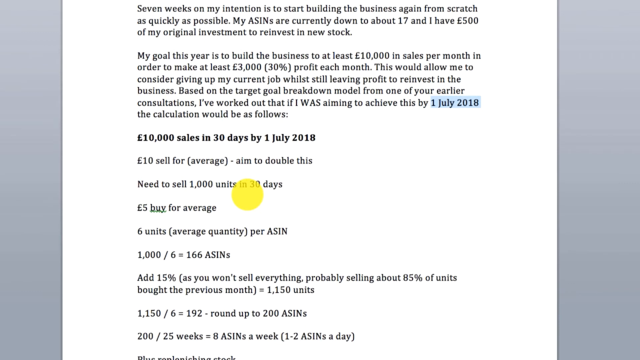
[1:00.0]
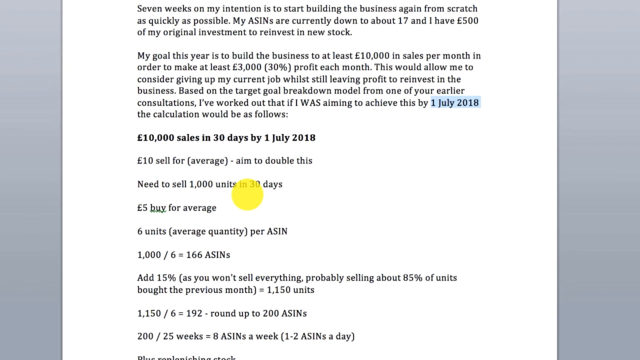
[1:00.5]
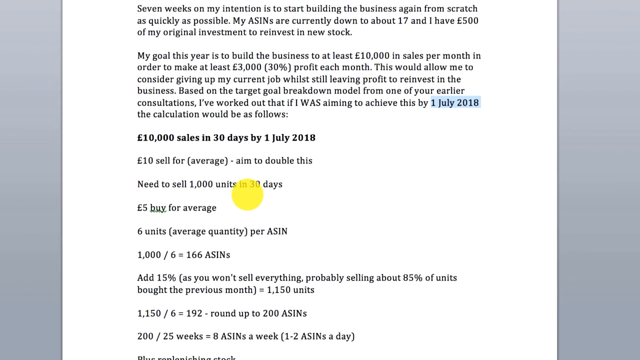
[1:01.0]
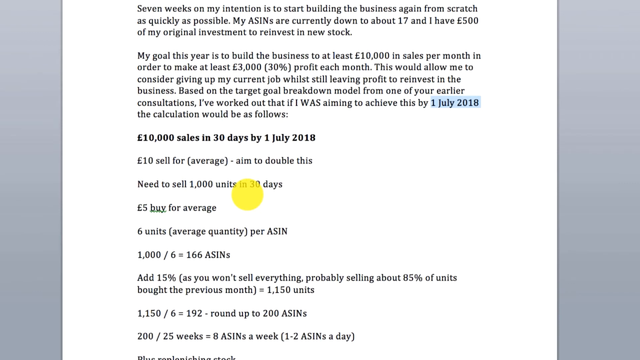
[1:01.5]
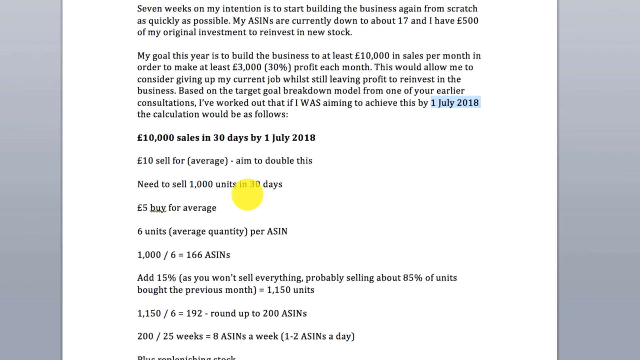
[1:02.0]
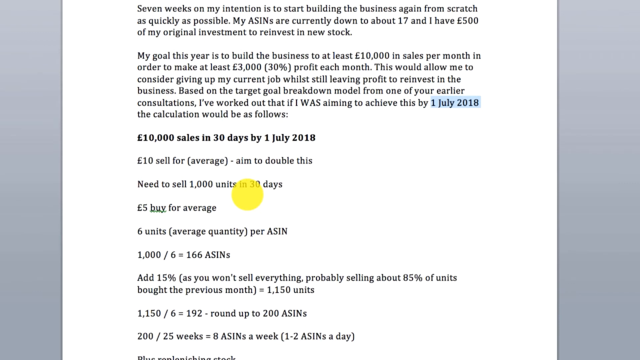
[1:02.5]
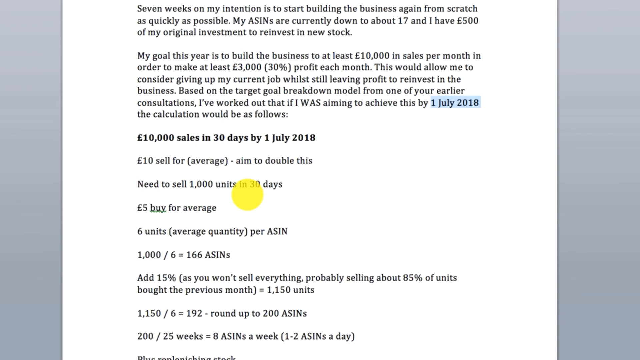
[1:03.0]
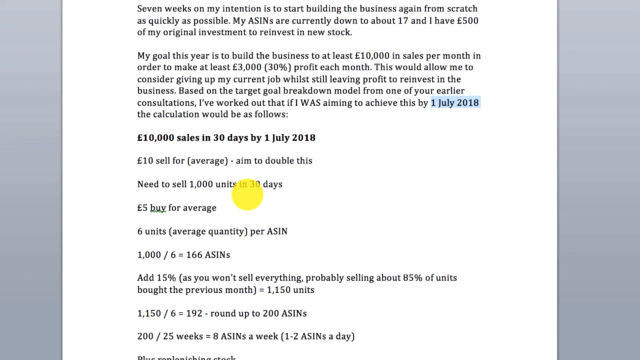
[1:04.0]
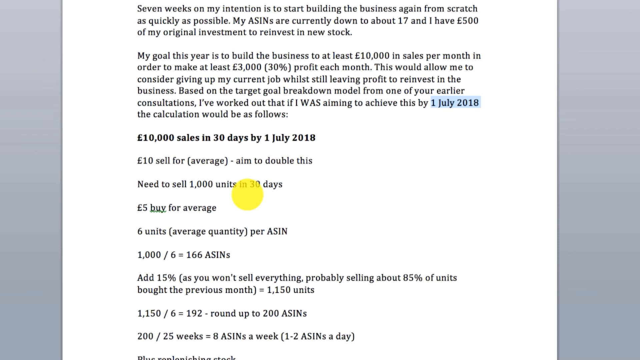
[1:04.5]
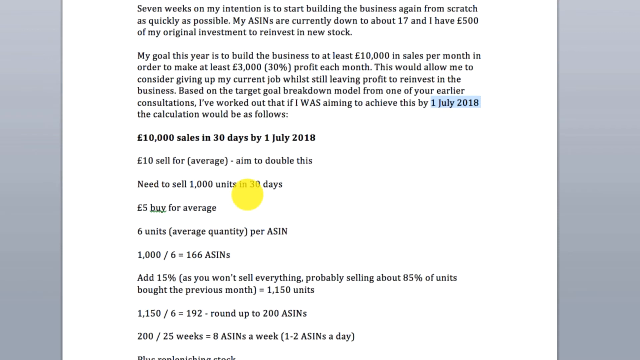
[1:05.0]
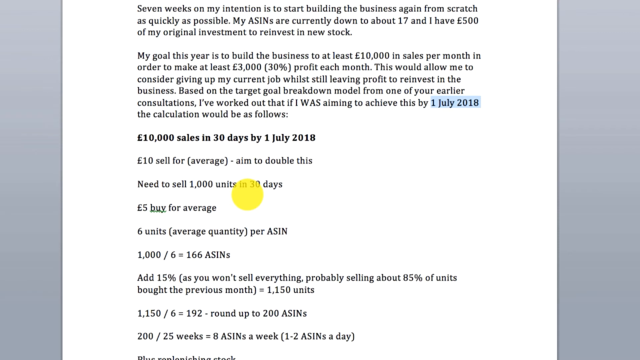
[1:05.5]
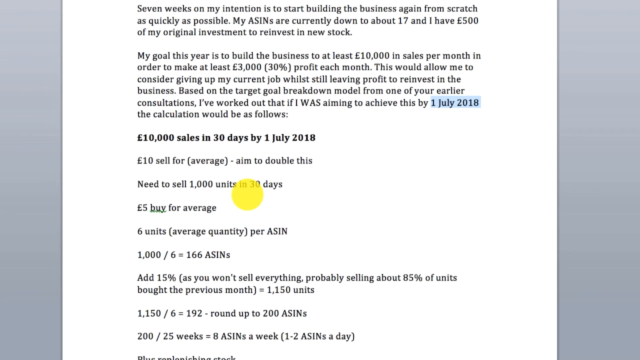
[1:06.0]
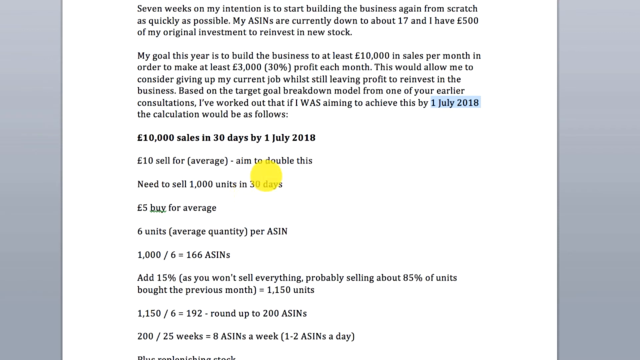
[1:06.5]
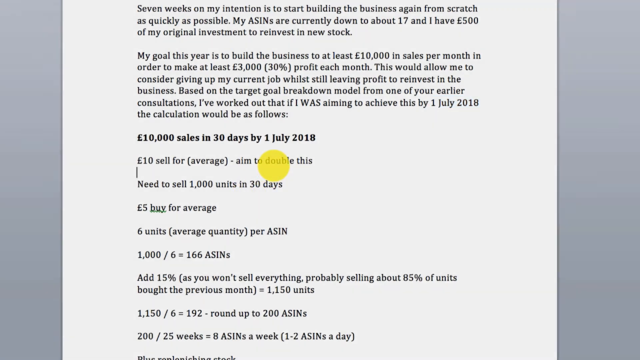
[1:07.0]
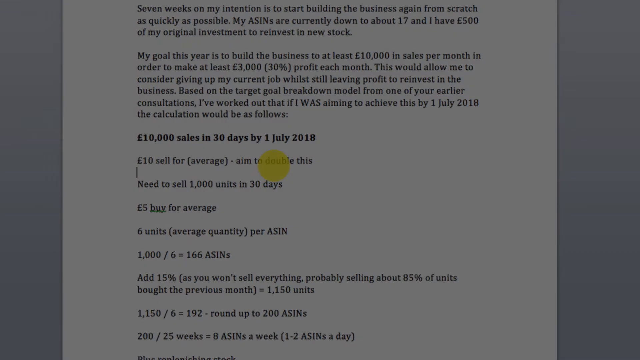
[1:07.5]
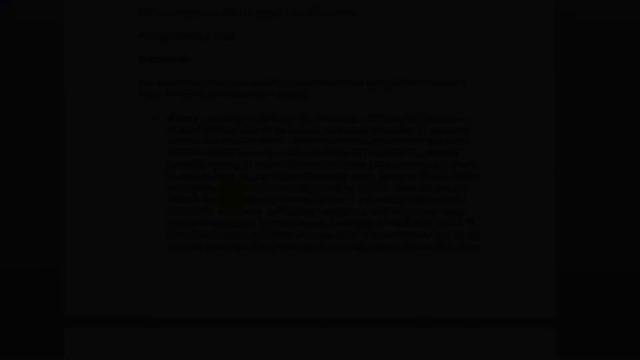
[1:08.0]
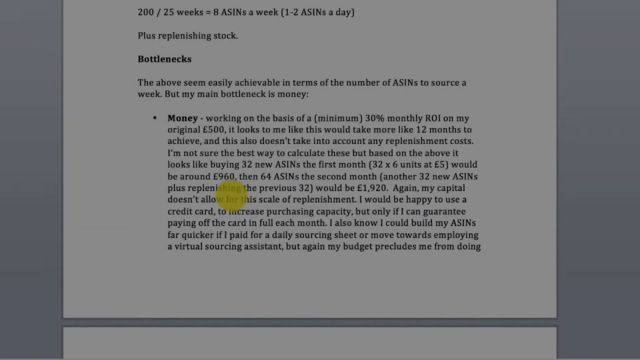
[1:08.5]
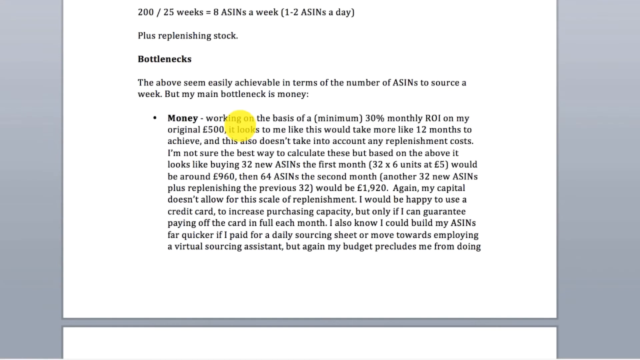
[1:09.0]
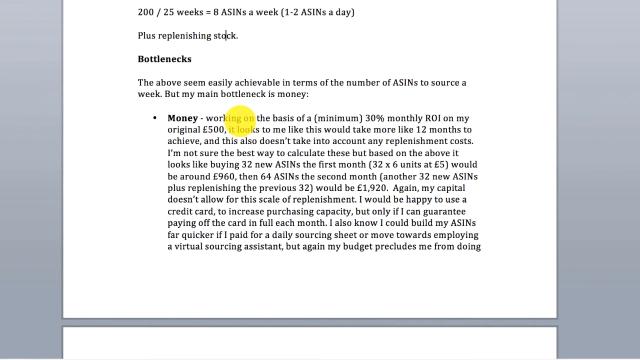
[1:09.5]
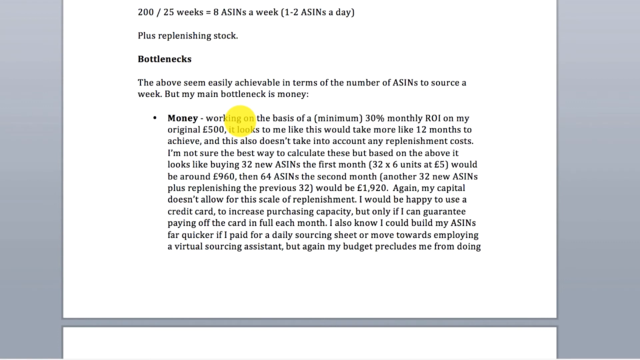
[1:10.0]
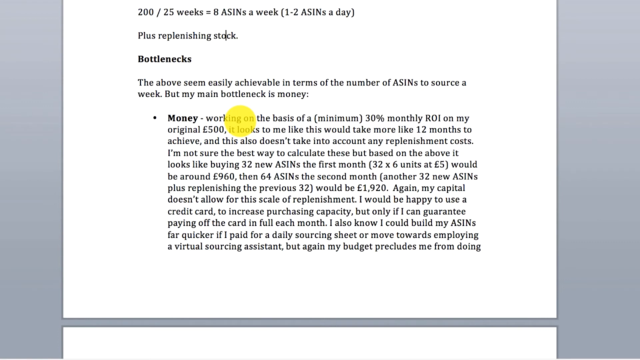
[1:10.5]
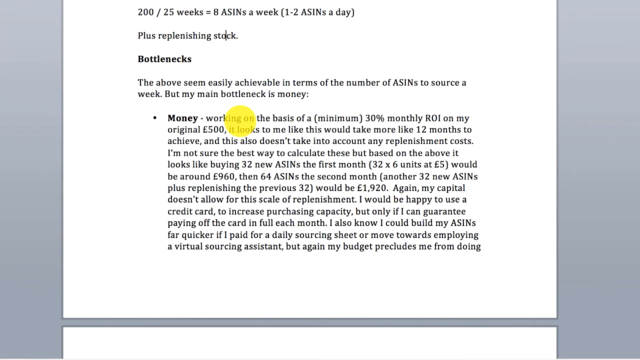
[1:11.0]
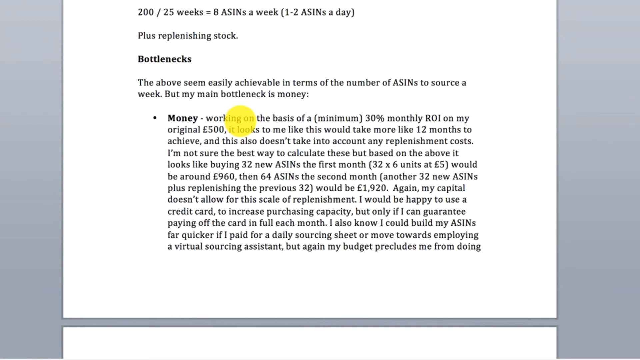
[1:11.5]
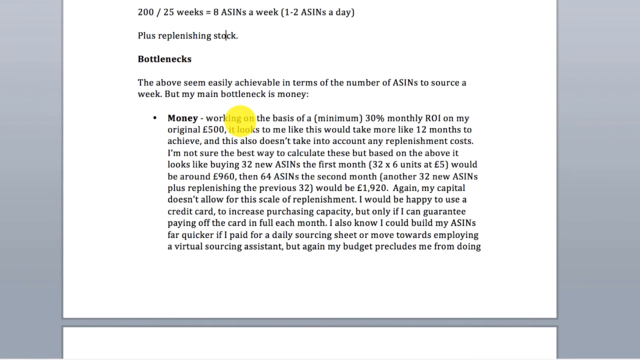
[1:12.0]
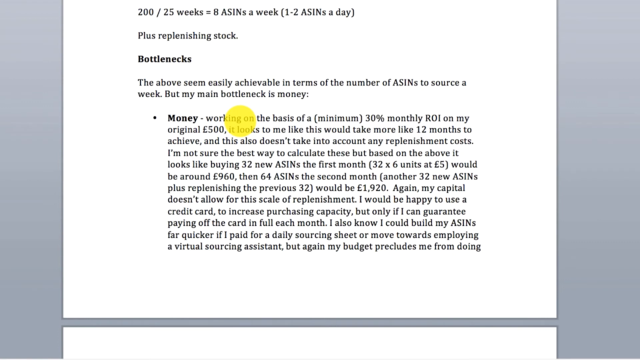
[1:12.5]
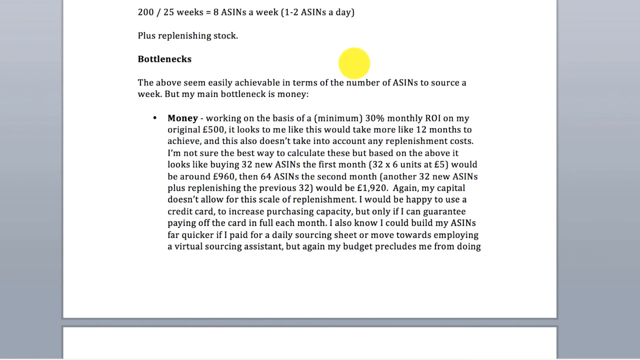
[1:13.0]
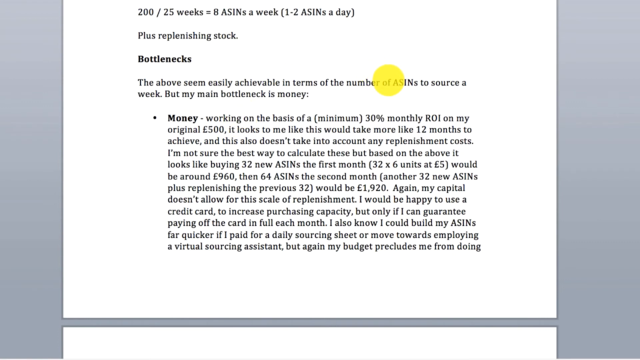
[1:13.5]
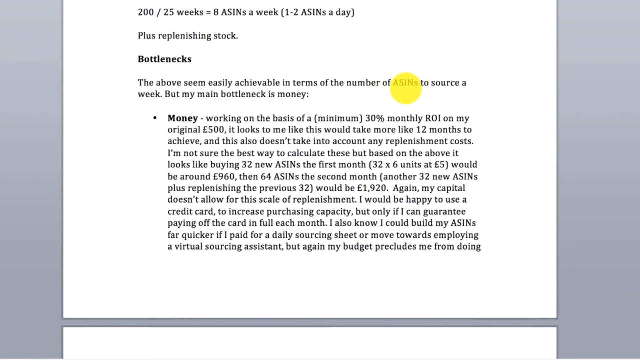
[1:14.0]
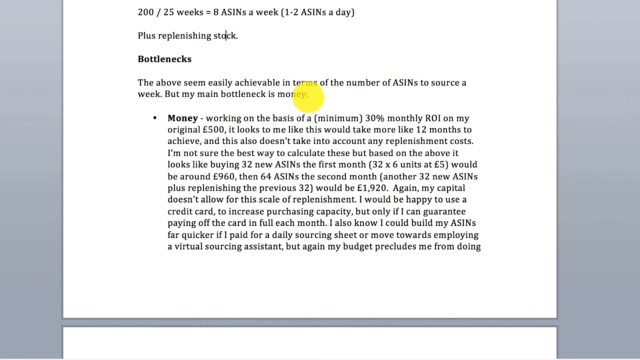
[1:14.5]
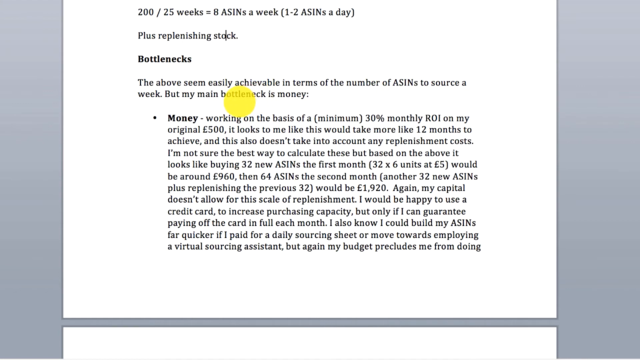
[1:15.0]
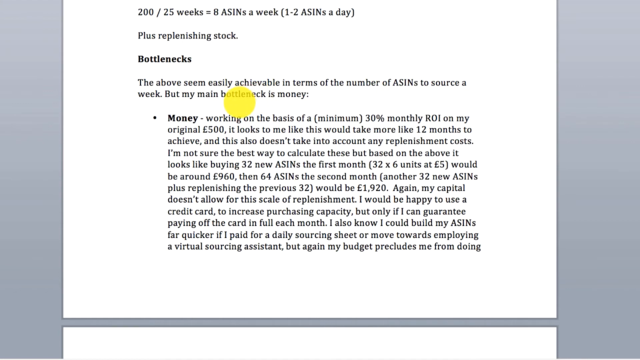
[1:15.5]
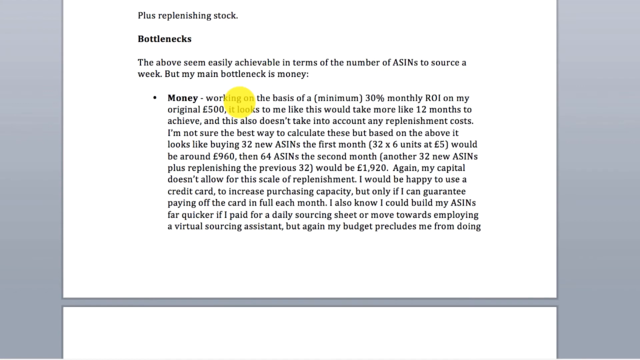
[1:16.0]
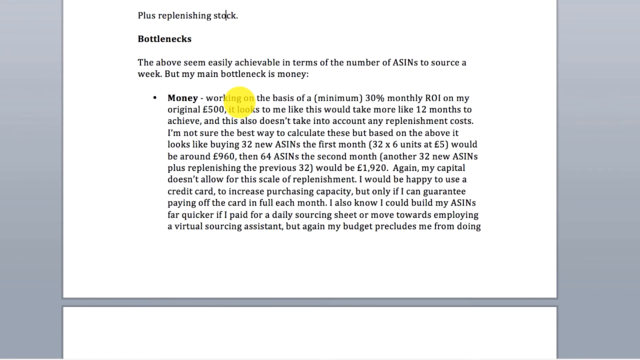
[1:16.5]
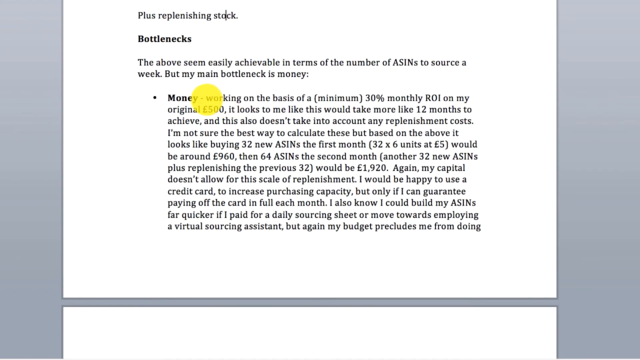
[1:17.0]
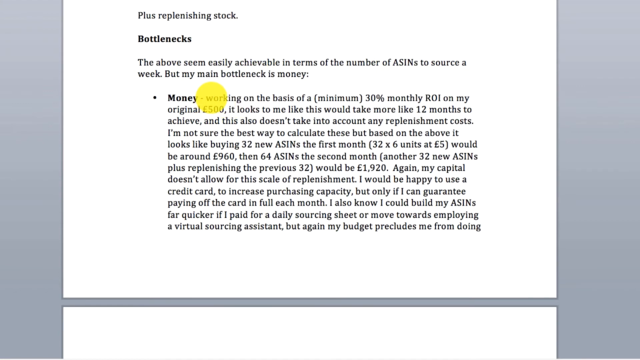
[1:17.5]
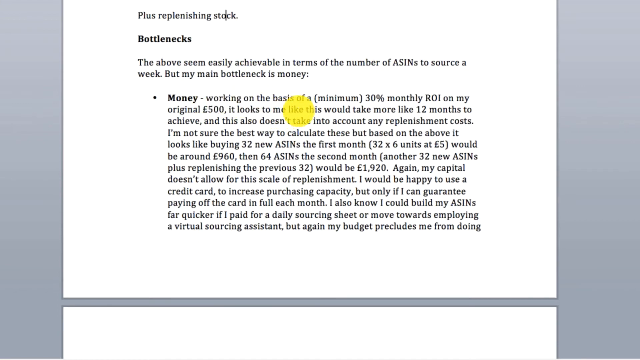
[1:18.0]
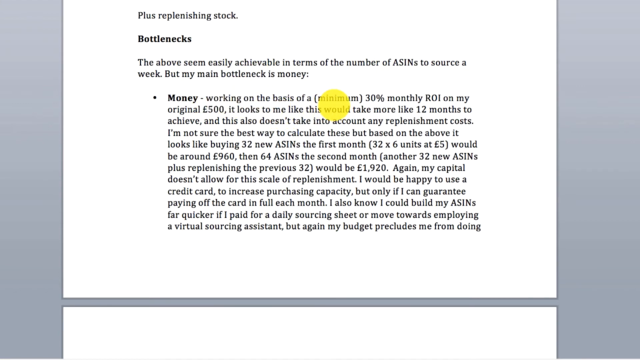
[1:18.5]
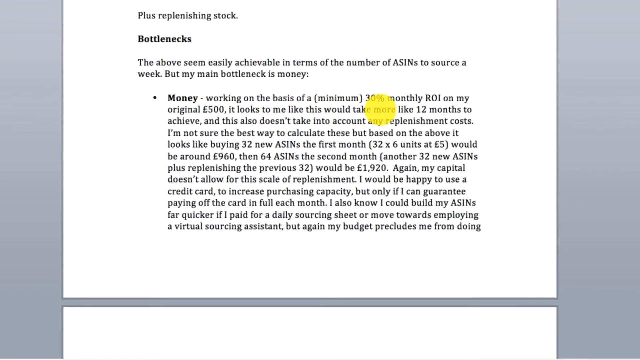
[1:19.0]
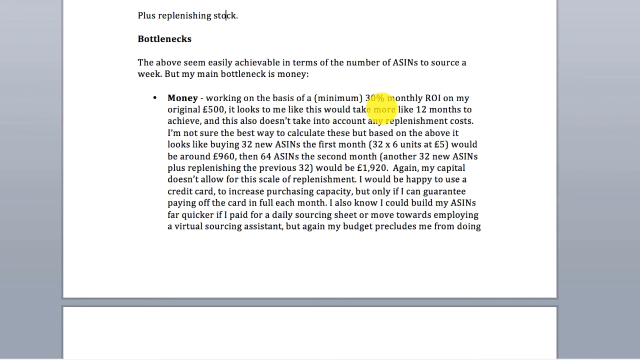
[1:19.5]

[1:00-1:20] A Word document is on screen, with a yellow circle cursor following along. It appears to be a document of notes relating to the goals, and it keeps scrolling down. It abruptly stops and dissolves into another Word document with a bold item that says "bottlenecks," possibly notes about bottlenecks. There is a lot of very highly technical text describing the bottlenecks, with the cursor at times moving around on screen and at times staying still. The segment ends on the first bottleneck on the screen.